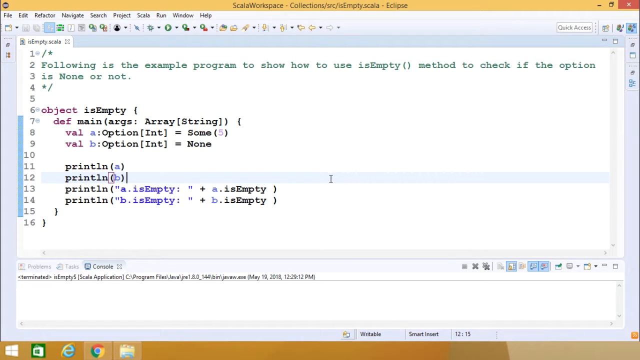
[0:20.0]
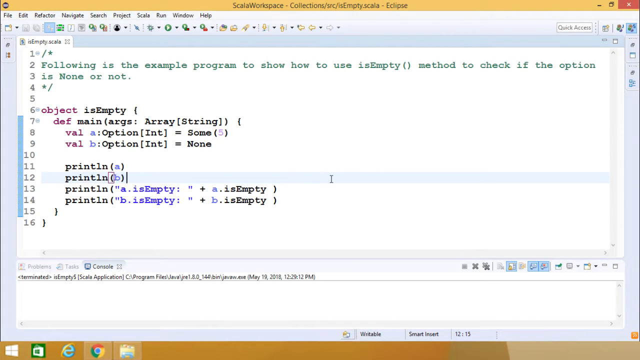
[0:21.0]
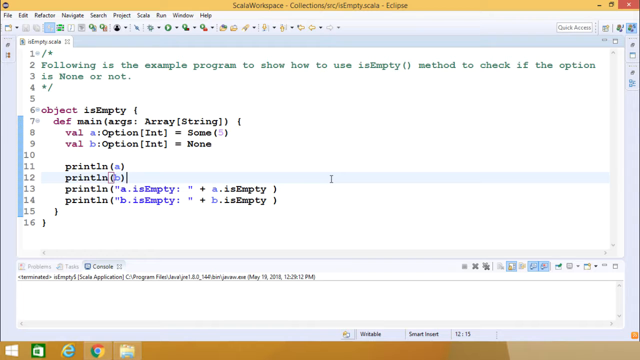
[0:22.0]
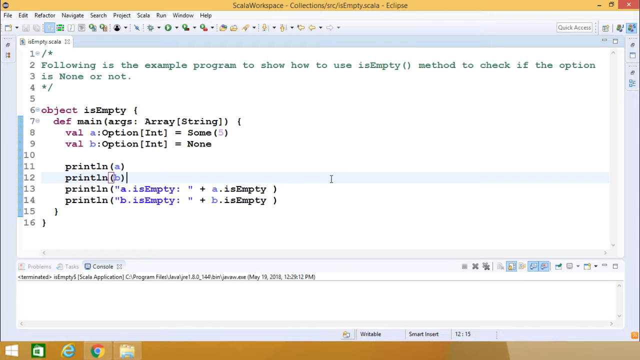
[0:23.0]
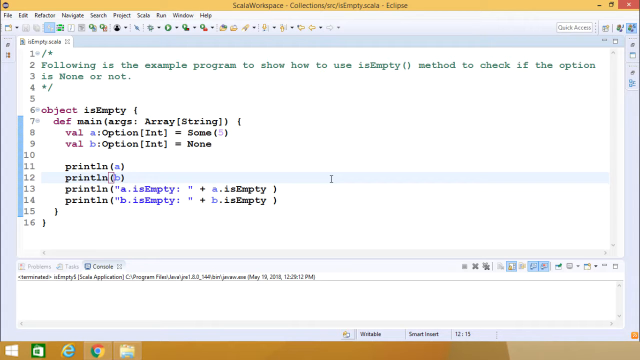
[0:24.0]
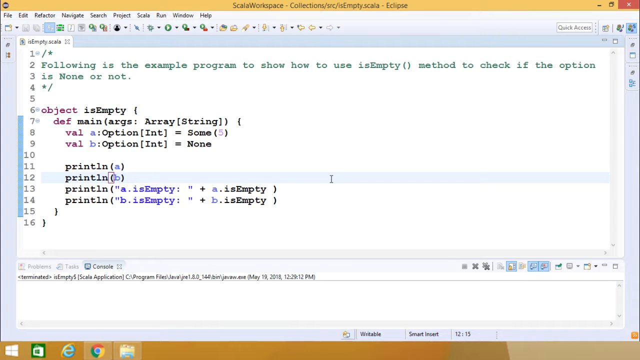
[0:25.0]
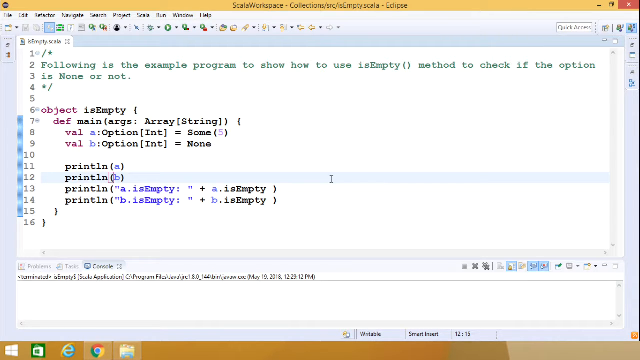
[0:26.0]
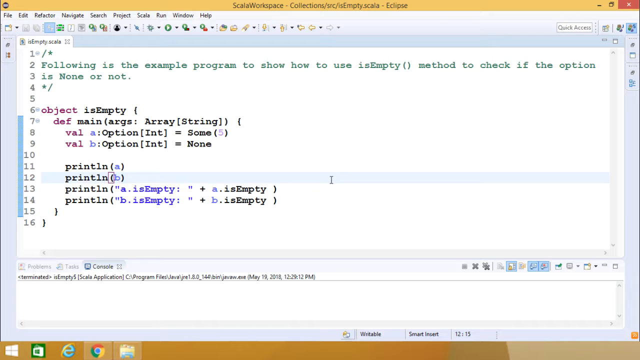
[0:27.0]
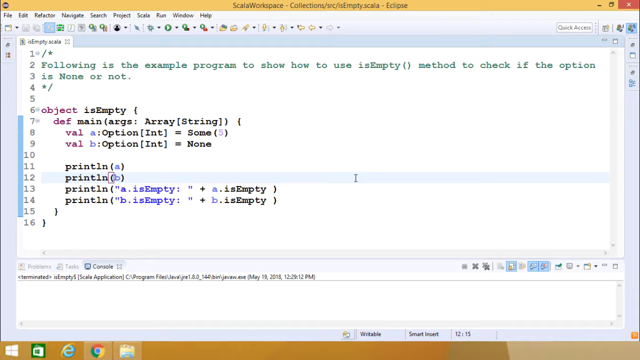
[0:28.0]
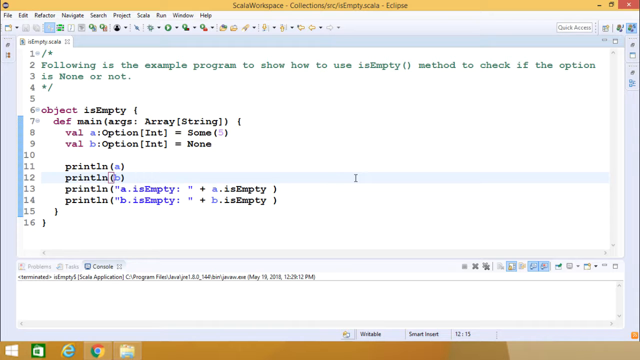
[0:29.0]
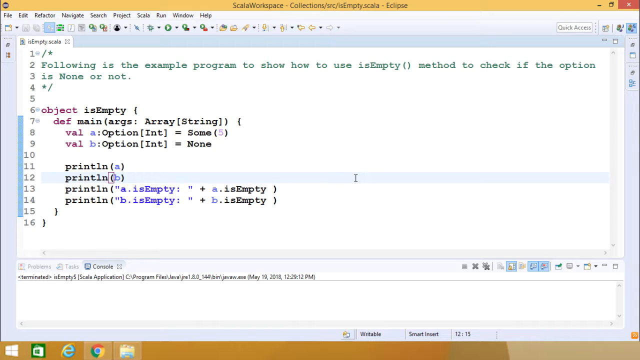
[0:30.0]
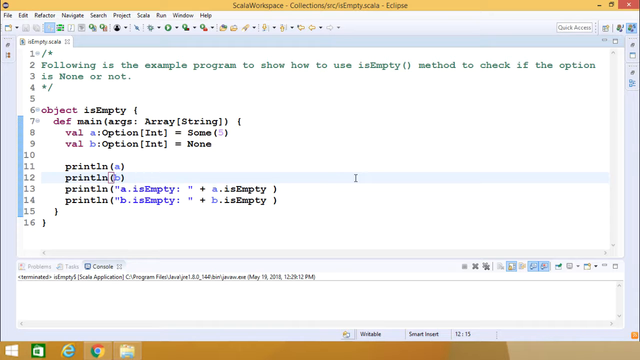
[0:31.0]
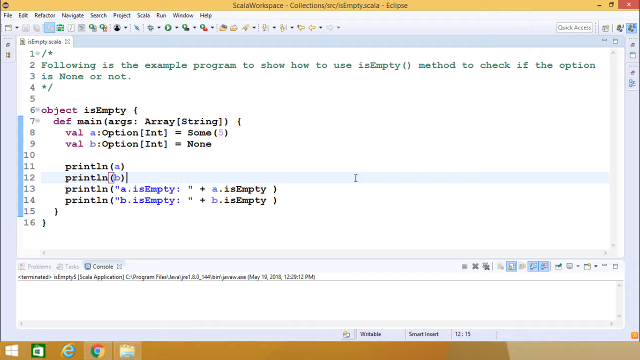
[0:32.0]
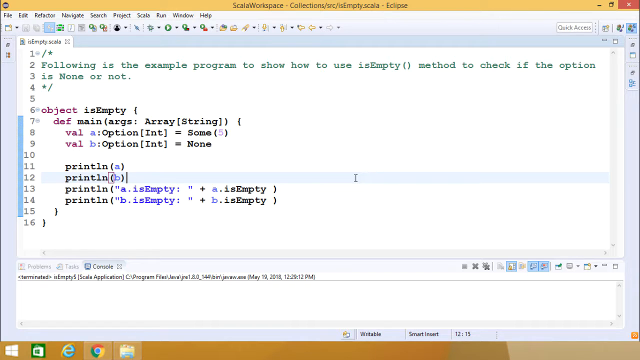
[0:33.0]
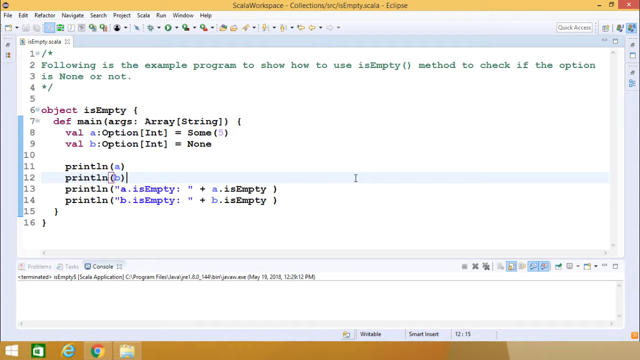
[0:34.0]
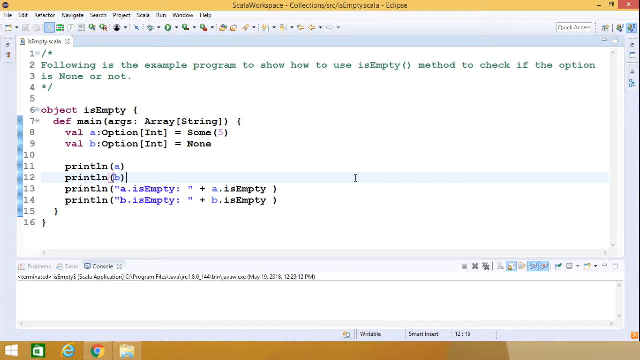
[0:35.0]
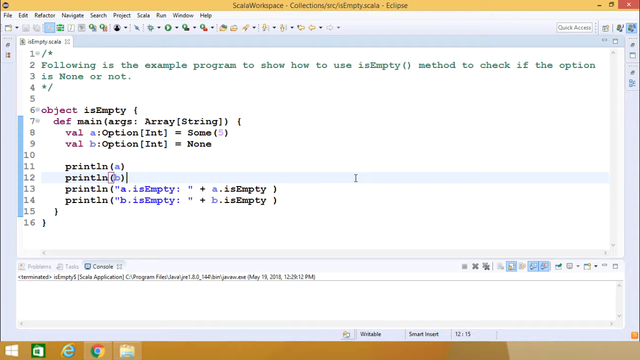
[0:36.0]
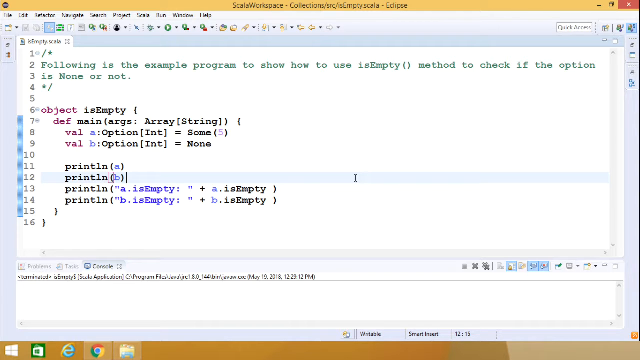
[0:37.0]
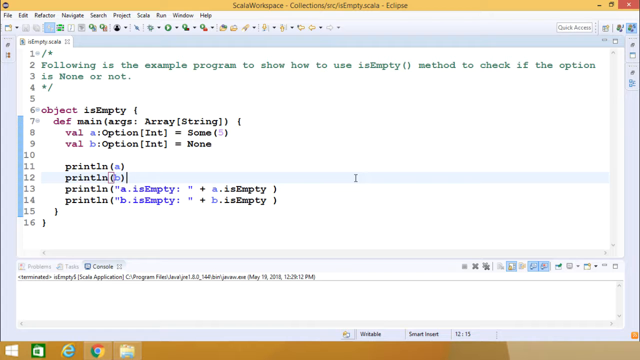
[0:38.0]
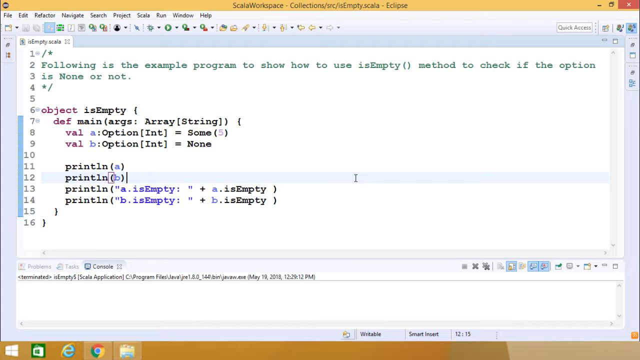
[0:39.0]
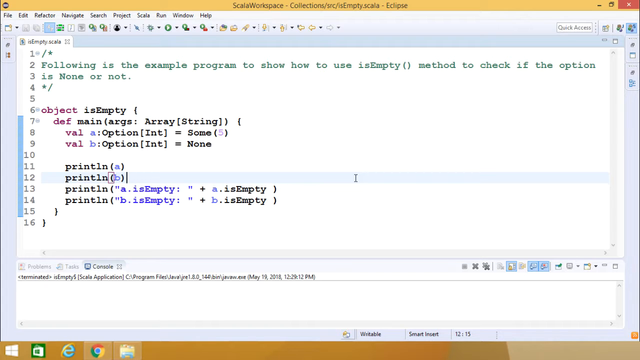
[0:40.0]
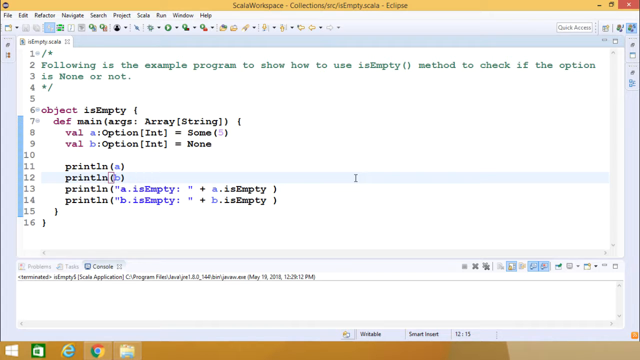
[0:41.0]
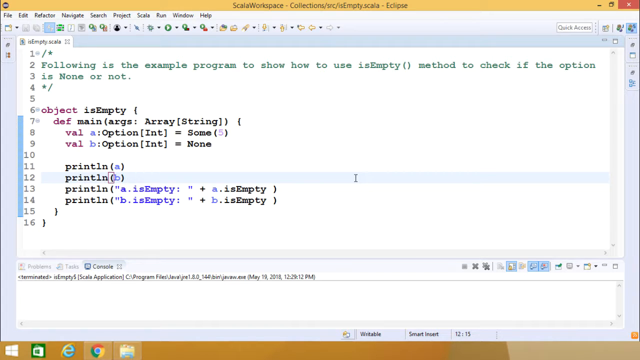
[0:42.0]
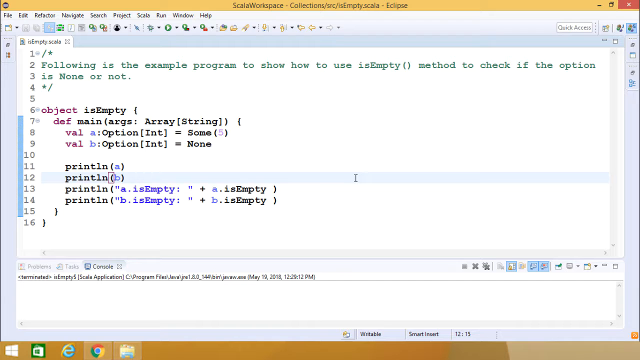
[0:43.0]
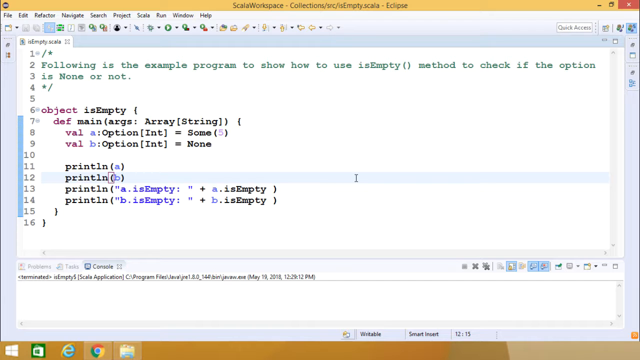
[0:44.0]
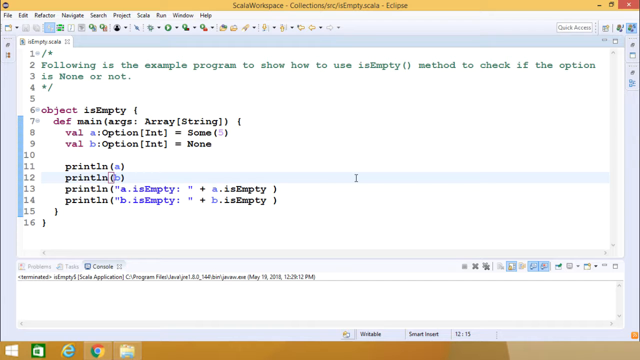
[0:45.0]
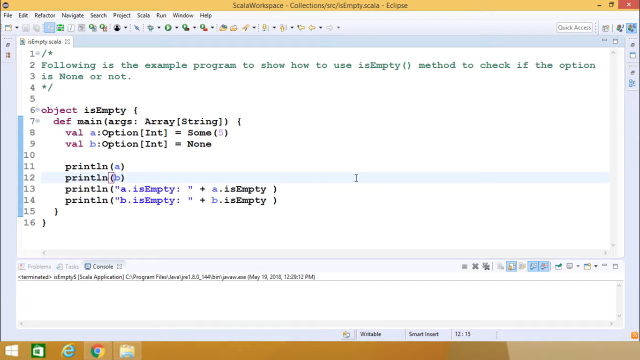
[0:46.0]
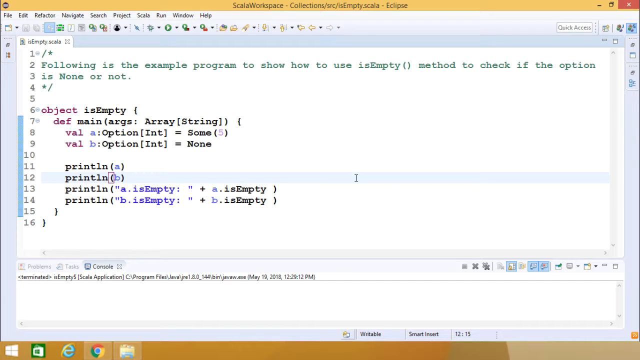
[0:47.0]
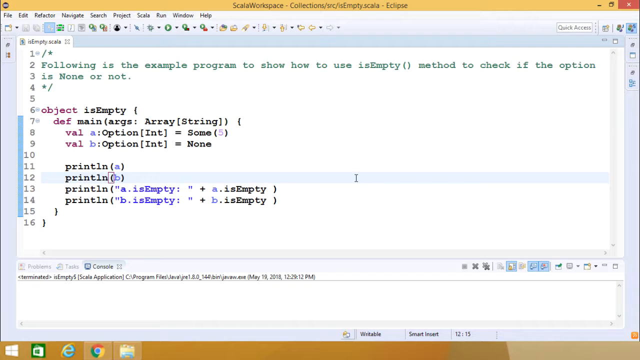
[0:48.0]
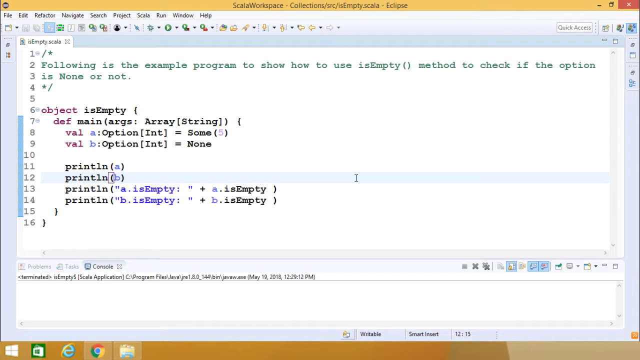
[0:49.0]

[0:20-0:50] The tutorial shows a software program that looks like a text editor, with a lot of code written in it. At the top, text reads "the following is the example program to show to use empty method to check if the option is none or not", with the code below it, apparently running from line 1 to line 16. The editor has one tab open, and its title is Scala Workplace. The first line of code, "object empty", is on line 6; line 5 above it is empty, and line 4 has an asterisk and a forward slash. At the bottom there appears to be another window open inside the editor, possibly for running the command.